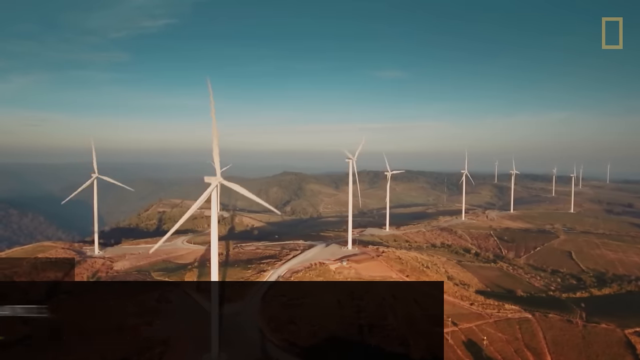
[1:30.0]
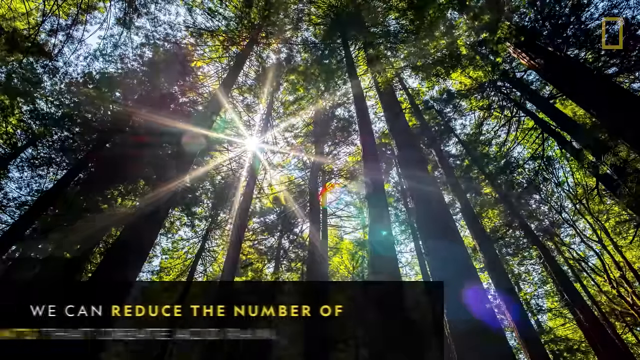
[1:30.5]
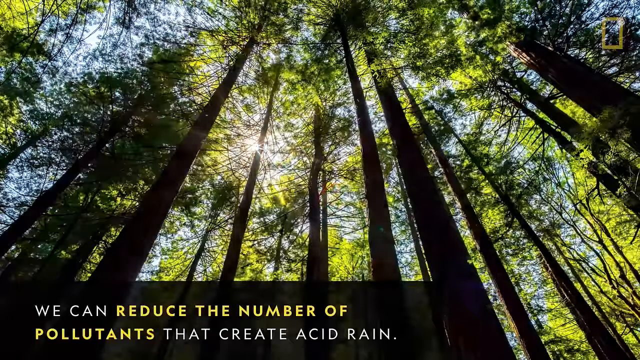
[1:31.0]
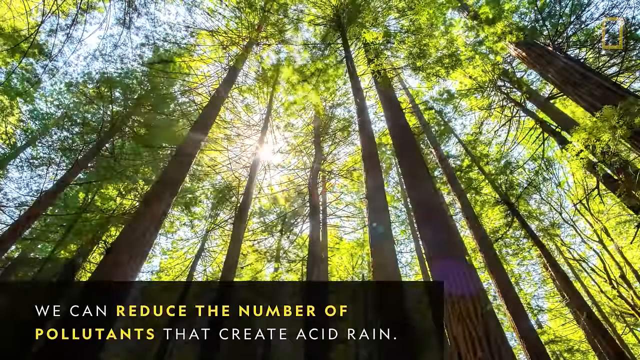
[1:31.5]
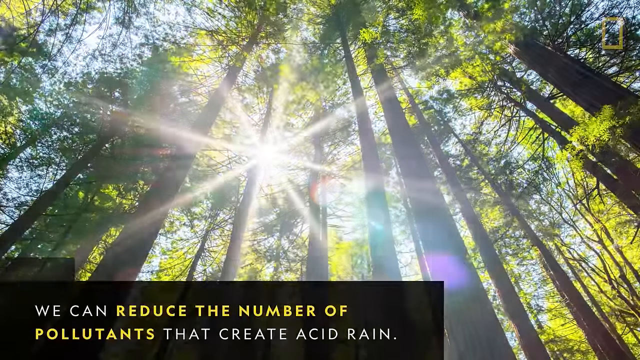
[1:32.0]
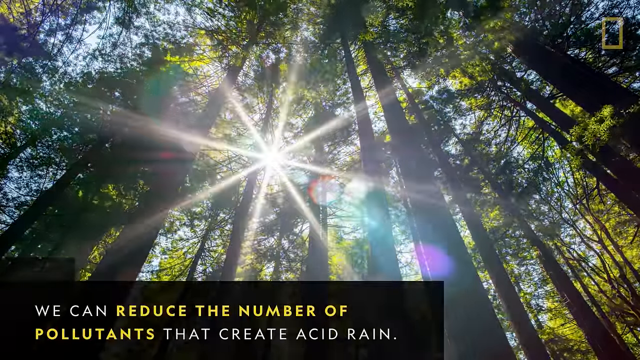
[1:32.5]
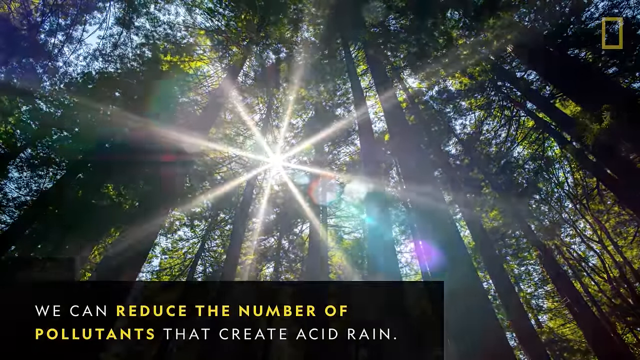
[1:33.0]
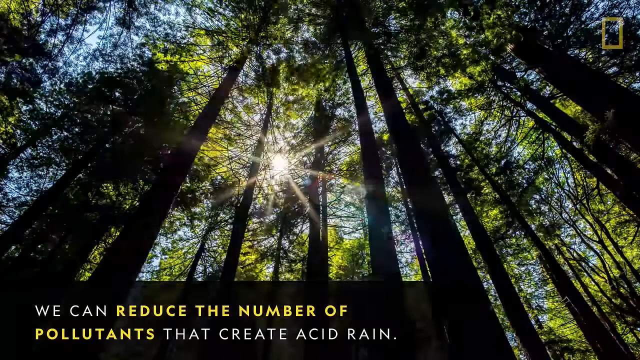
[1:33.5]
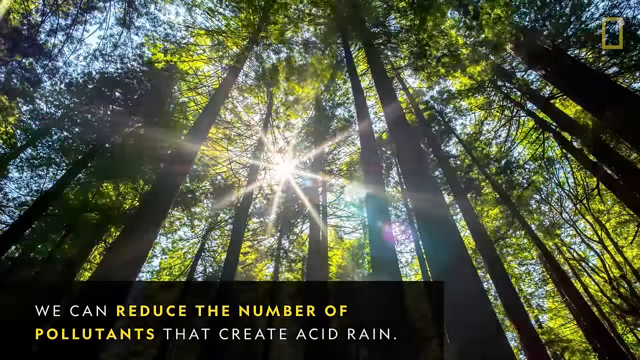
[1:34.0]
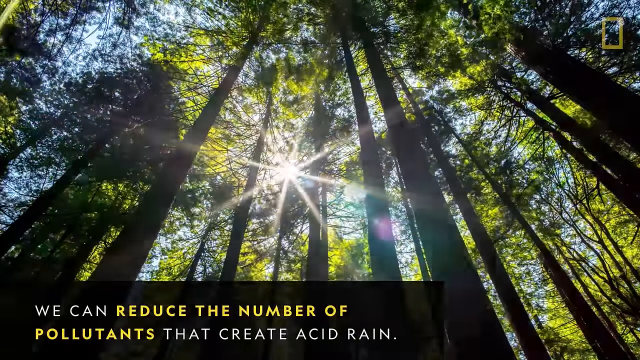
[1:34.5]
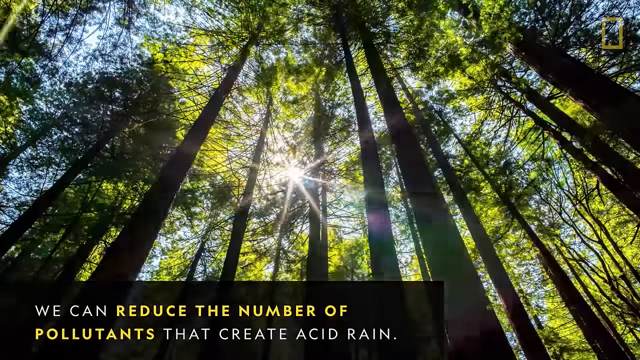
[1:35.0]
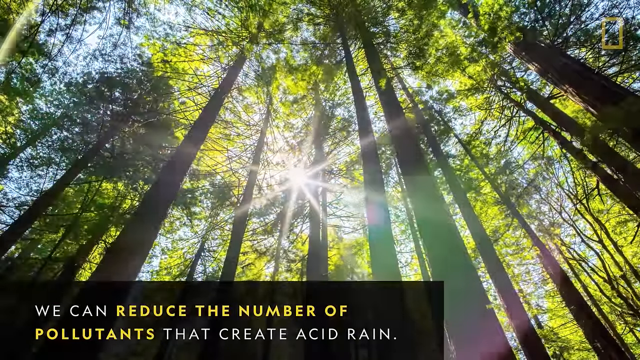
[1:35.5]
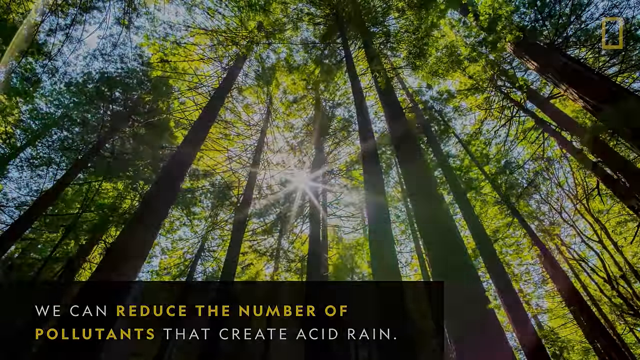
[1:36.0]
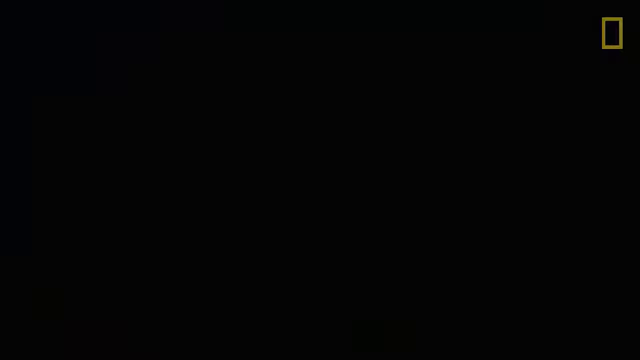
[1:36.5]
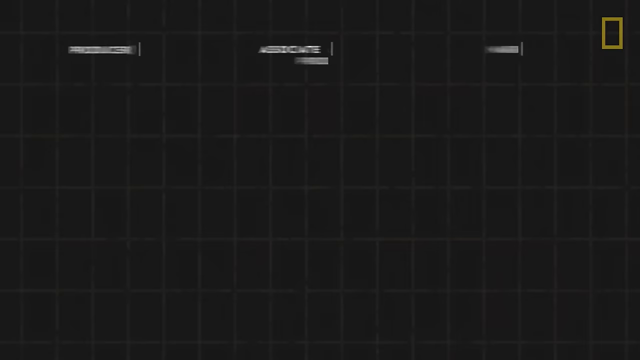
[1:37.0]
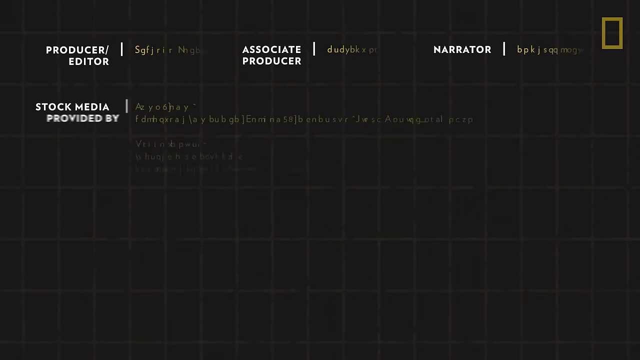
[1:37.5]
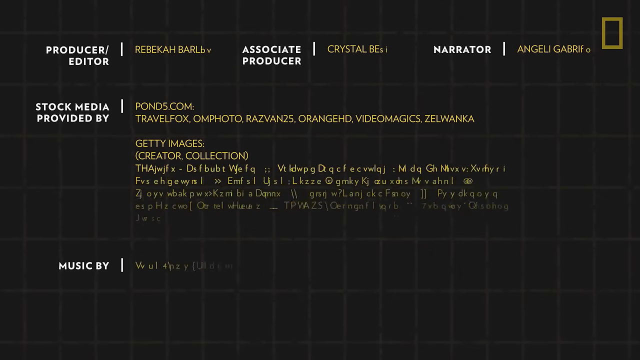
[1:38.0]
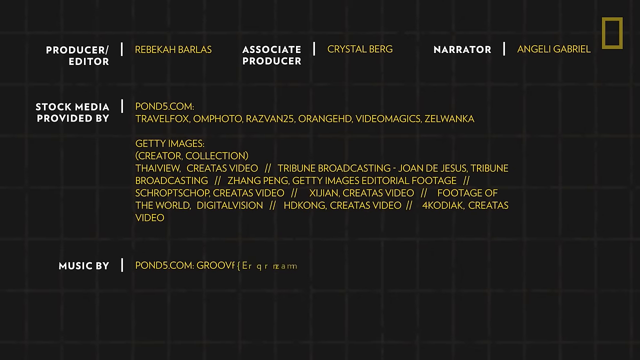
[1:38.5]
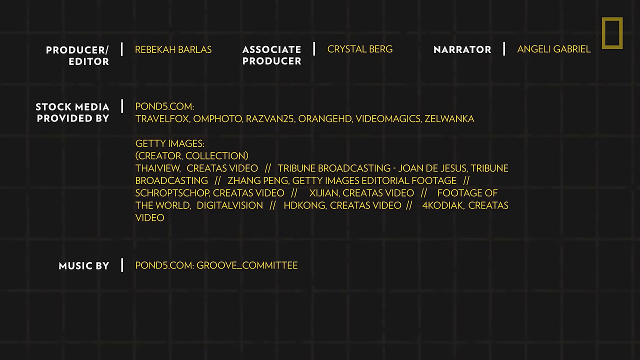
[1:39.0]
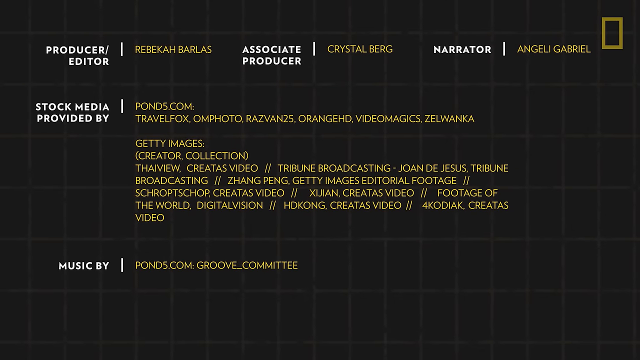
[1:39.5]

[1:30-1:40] The video states that the pollutants that create acid rain can be reduced.